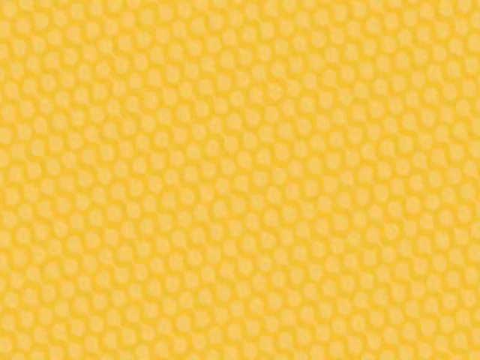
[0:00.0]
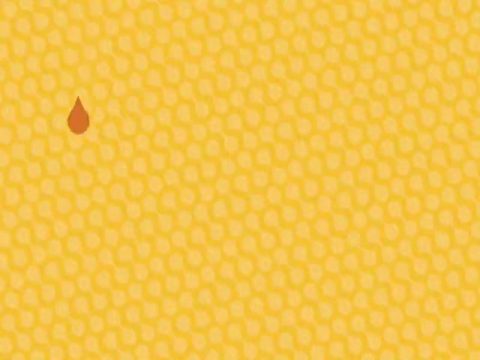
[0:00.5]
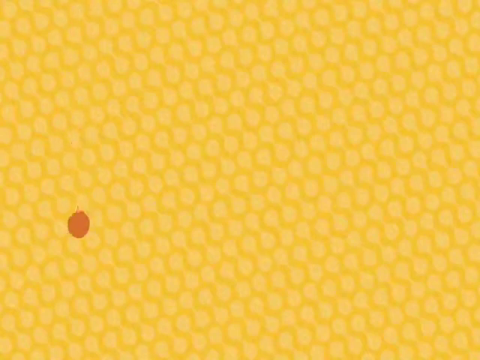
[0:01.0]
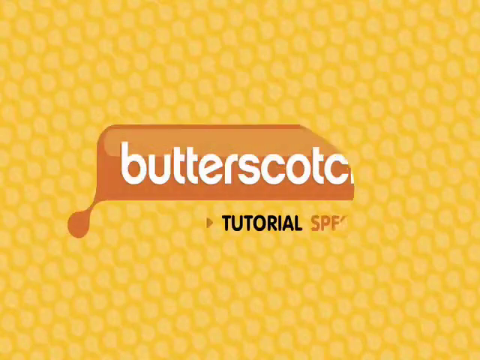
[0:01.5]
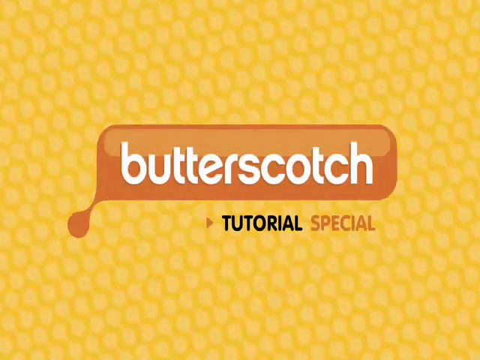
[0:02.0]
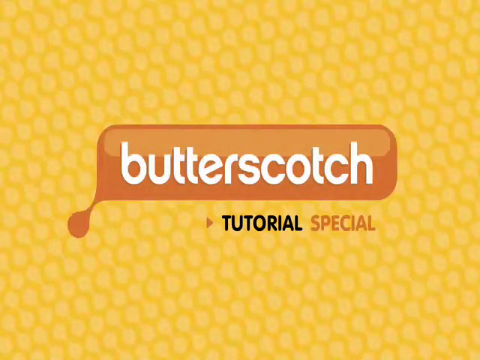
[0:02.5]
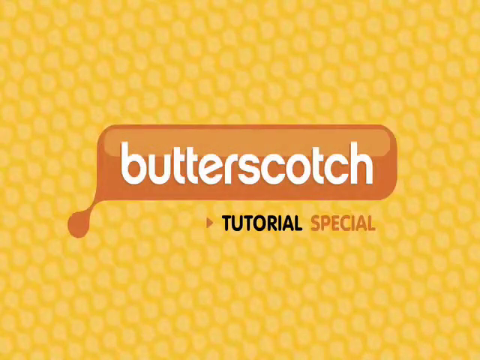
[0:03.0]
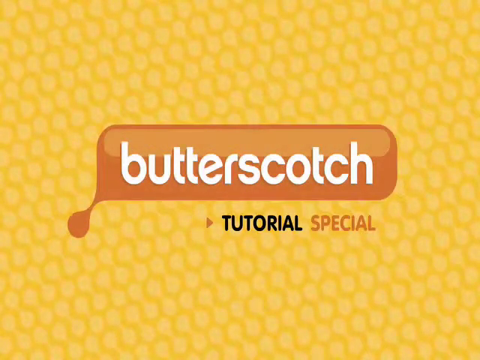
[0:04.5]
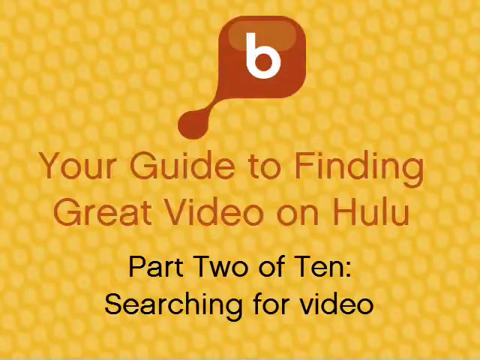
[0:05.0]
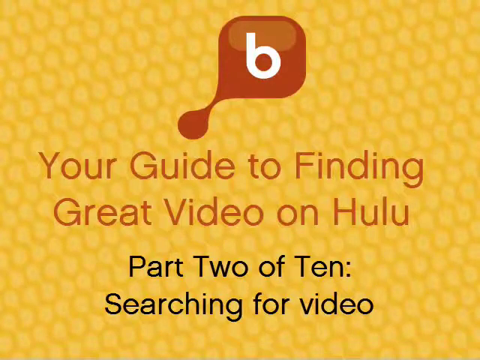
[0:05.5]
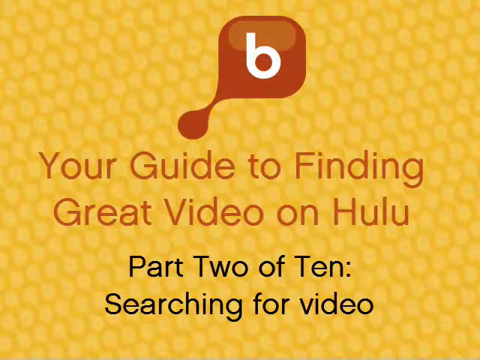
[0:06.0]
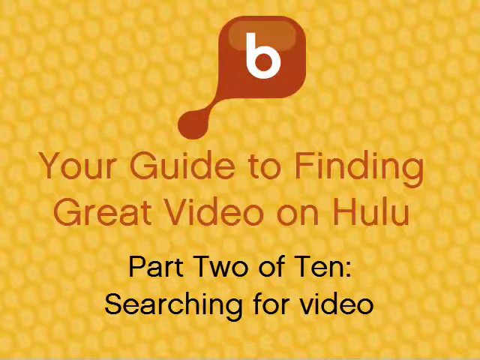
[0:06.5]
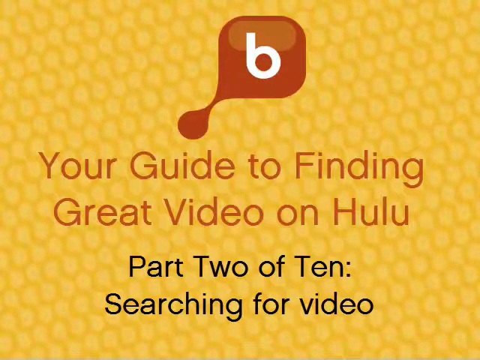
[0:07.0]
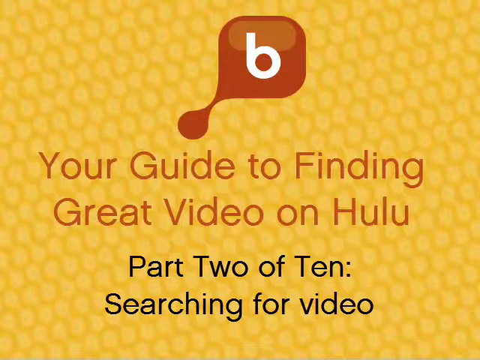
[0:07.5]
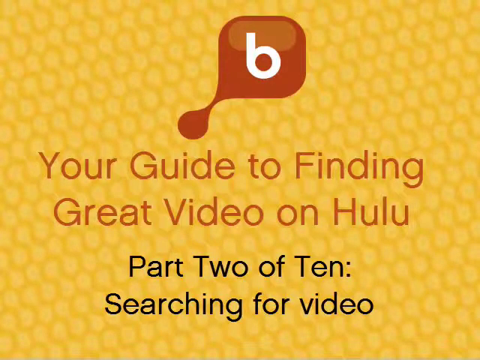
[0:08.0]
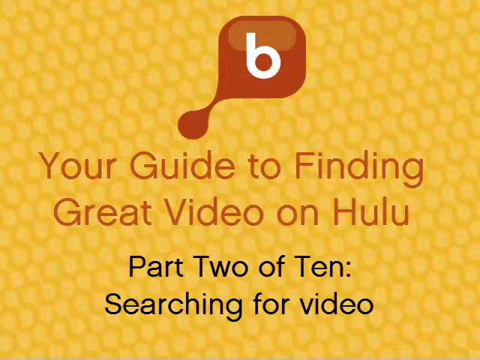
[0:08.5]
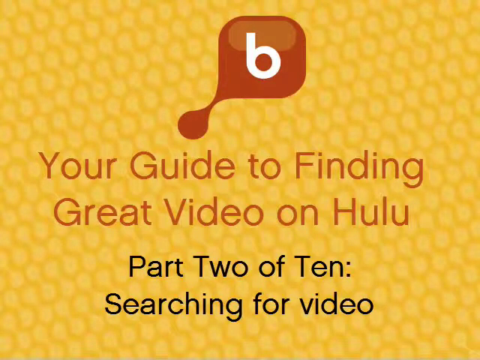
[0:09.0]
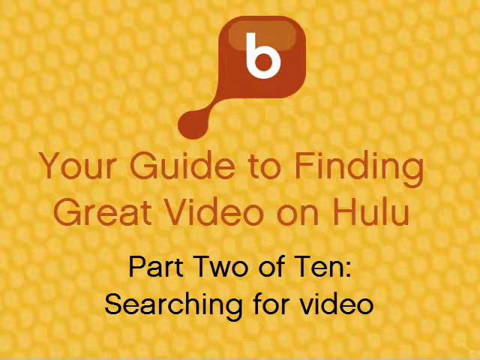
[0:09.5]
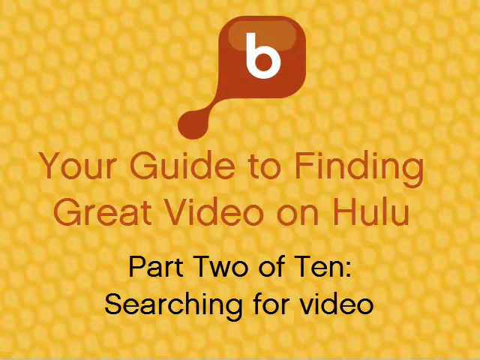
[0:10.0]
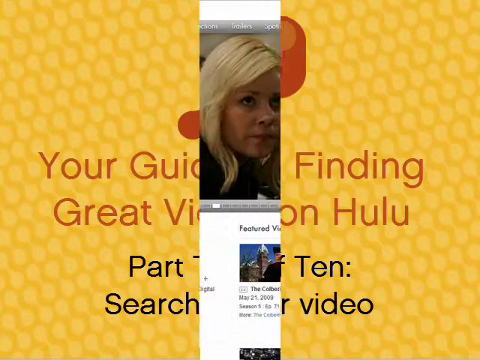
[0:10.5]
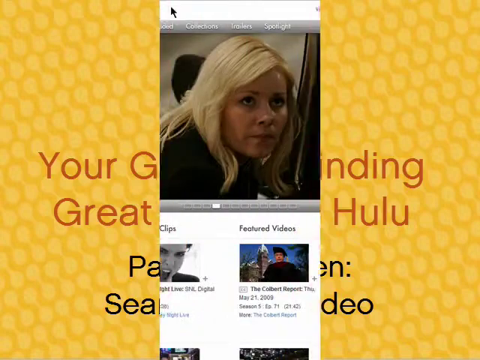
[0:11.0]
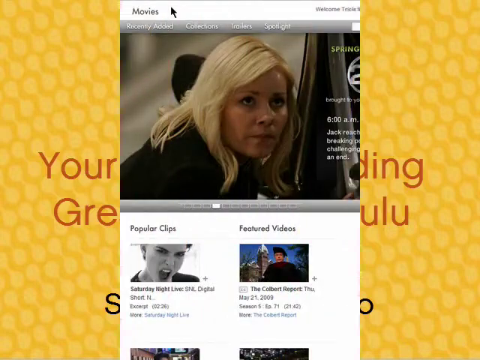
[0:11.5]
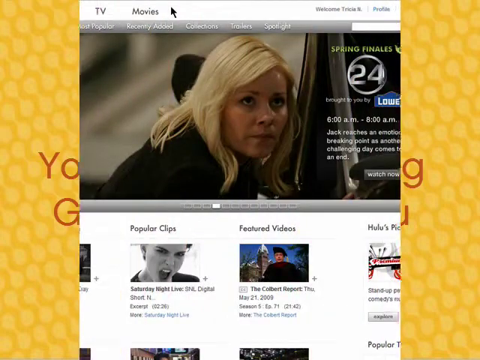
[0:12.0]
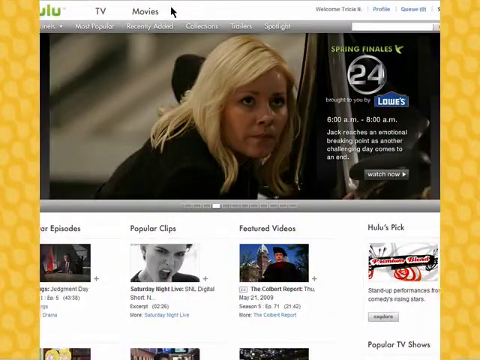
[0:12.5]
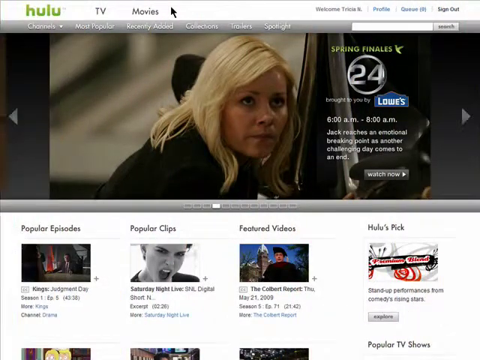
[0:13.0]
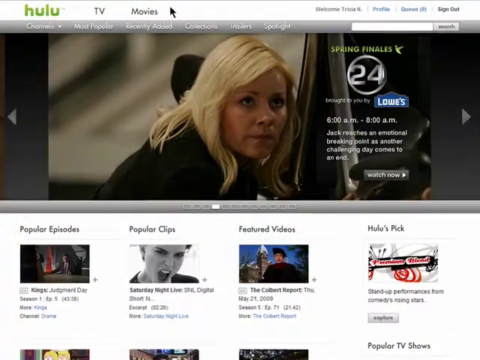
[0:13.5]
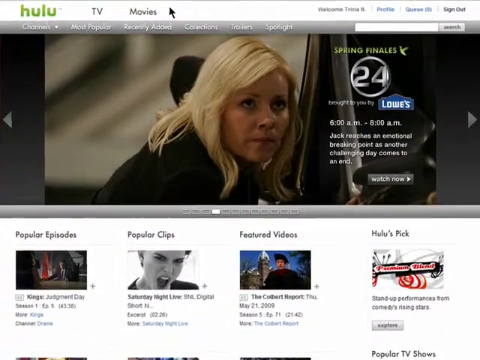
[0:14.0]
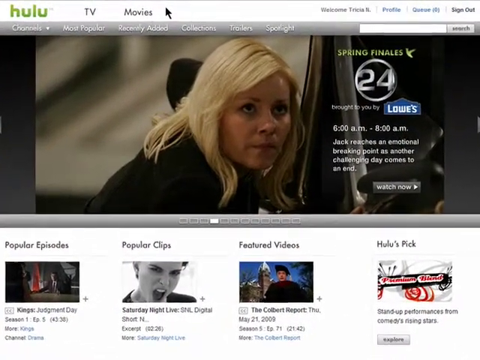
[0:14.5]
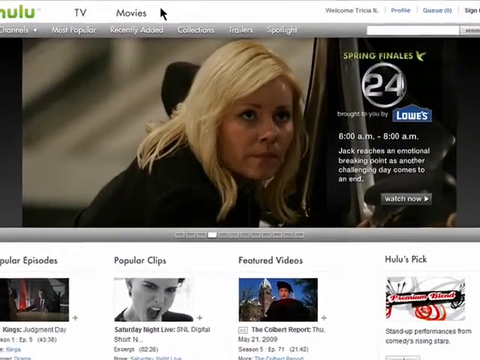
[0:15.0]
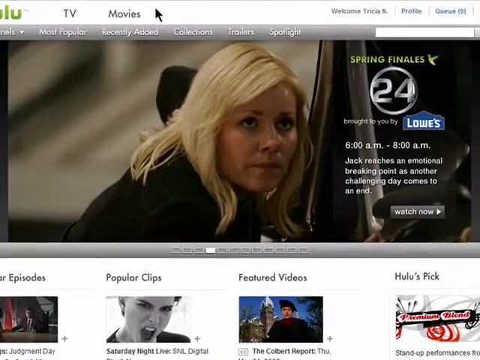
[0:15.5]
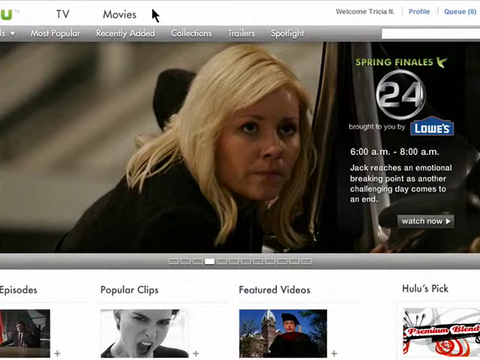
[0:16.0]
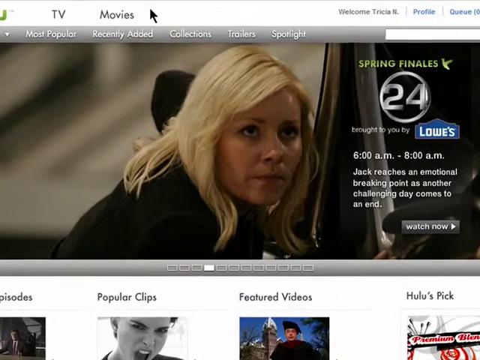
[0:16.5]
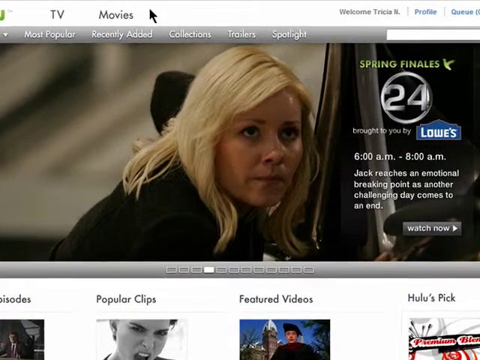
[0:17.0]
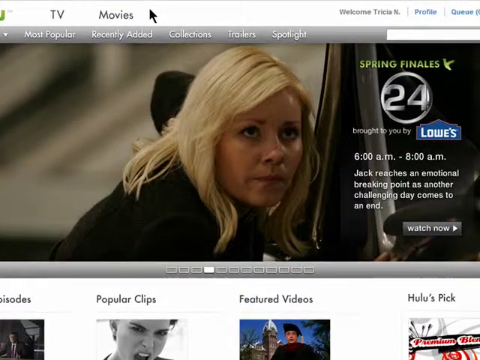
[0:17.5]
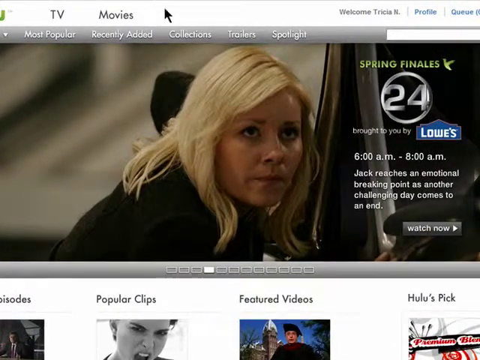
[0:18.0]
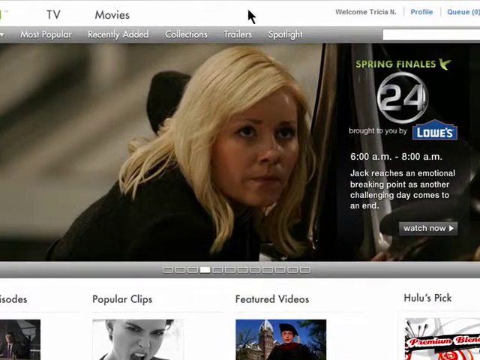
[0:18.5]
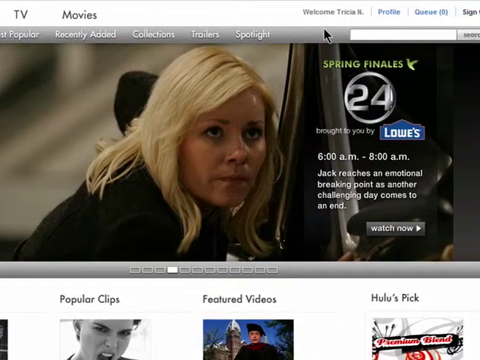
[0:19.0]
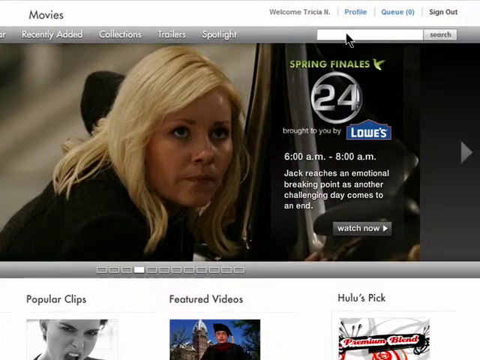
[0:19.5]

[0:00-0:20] A yellow background has a pale-yellow design within the darker yellow; the design almost looks like a zoomed-in ear of corn. A tan drop comes down from the top of the screen and turns into a tan bubble containing the word "butterscotch." Beneath it is an orange arrow, with "tutorial" in bold black letters next to the arrow, followed by the word "special" in bold orange letters. Next, a bubble pops up toward the top of the screen, also forming from a teardrop shape; it is a square bubble with rounded corners, with a lowercase "b" written in white inside. The words "part 2 of 10. Searching for a video" then appear in black on the bottom portion of the scene. The scene glides away to the right and to the left, opening up a new scene in the middle: a Hulu page on a computer monitor, with the trailer at the top for 24.